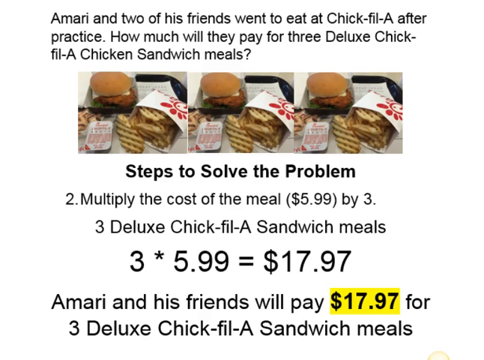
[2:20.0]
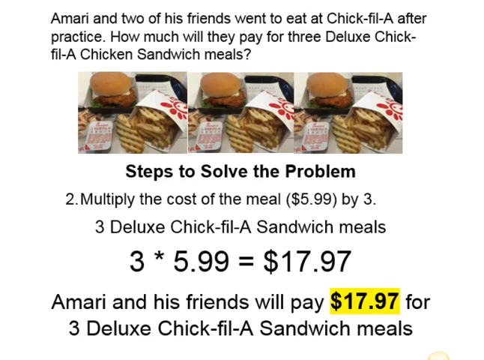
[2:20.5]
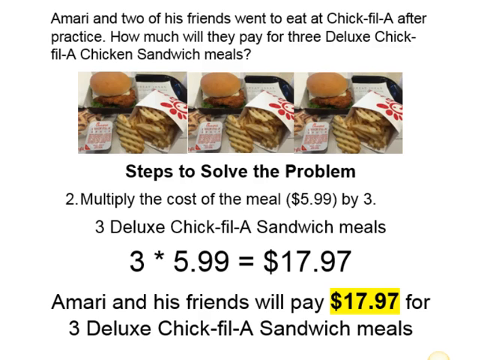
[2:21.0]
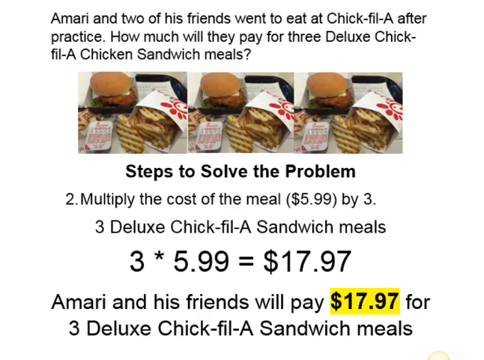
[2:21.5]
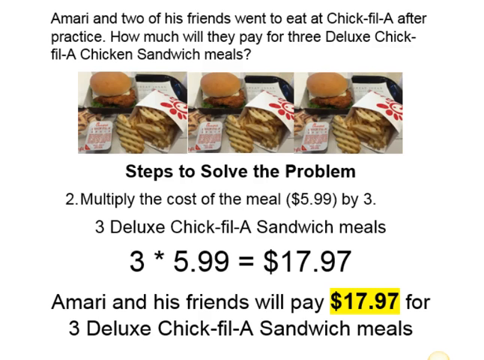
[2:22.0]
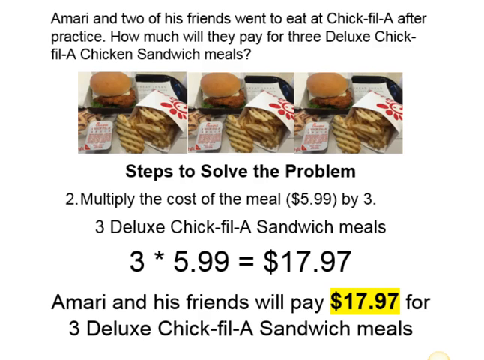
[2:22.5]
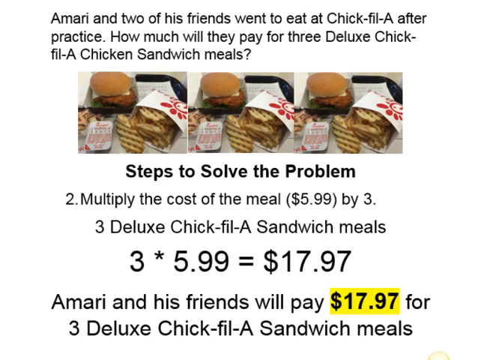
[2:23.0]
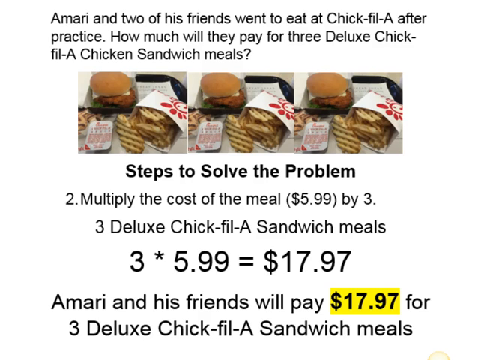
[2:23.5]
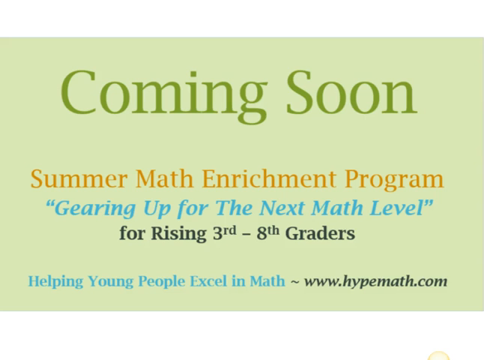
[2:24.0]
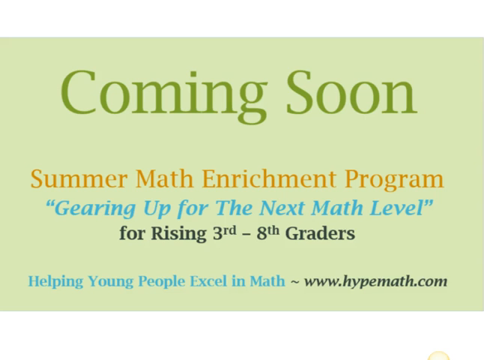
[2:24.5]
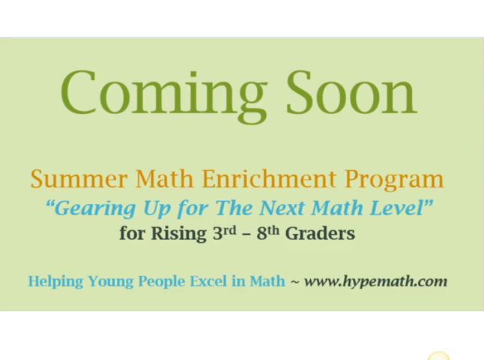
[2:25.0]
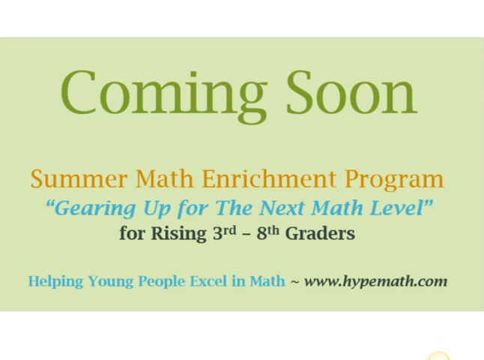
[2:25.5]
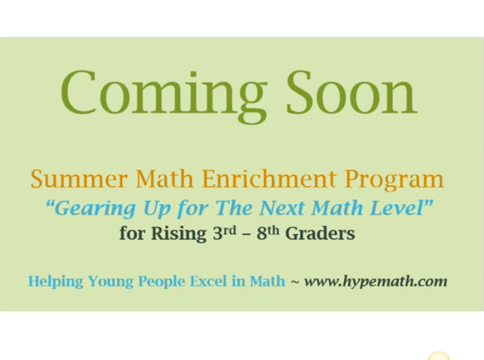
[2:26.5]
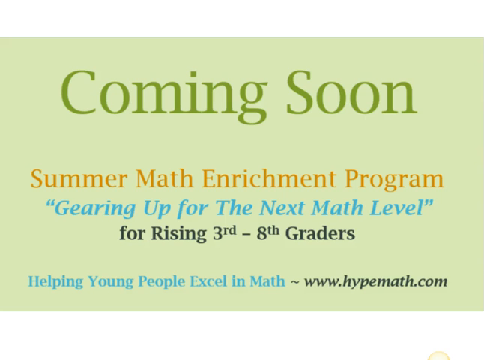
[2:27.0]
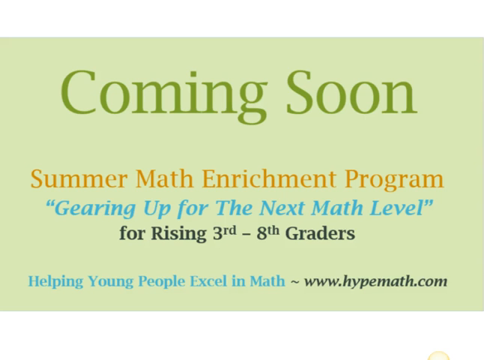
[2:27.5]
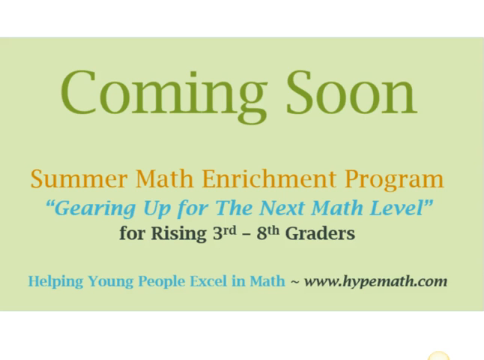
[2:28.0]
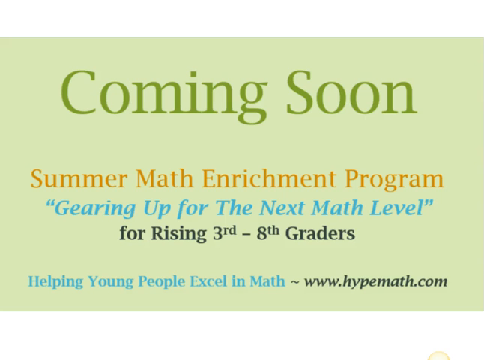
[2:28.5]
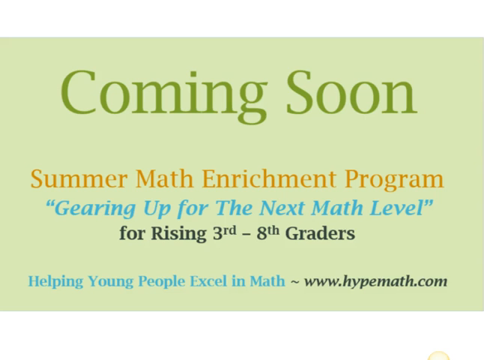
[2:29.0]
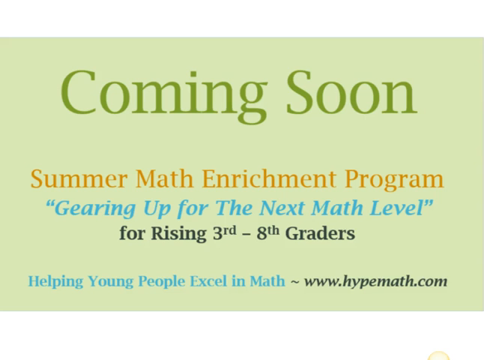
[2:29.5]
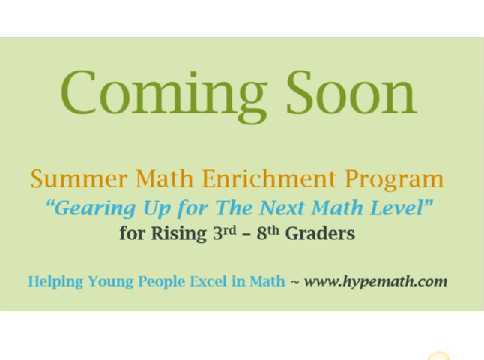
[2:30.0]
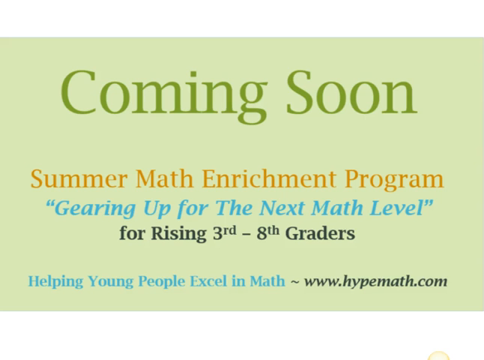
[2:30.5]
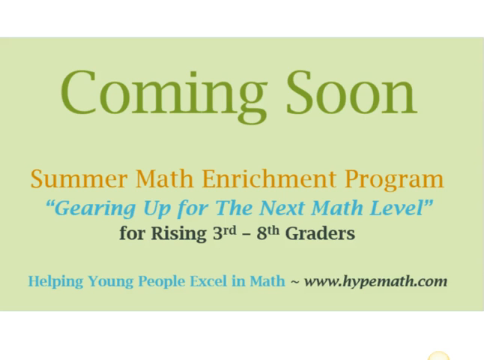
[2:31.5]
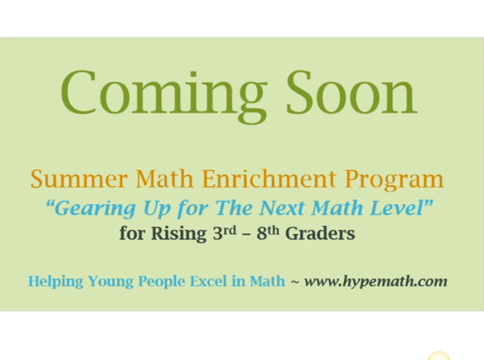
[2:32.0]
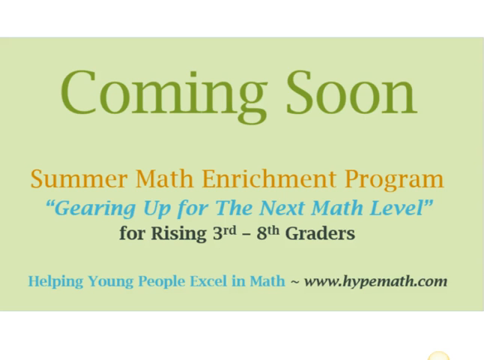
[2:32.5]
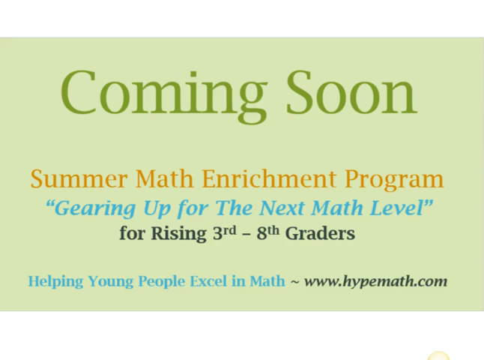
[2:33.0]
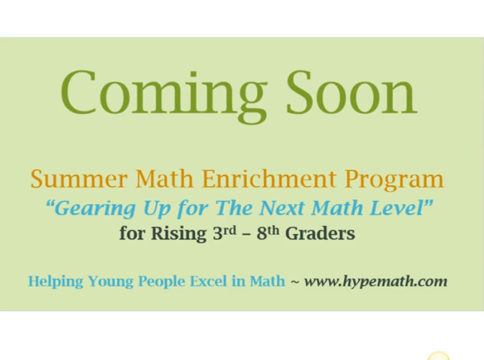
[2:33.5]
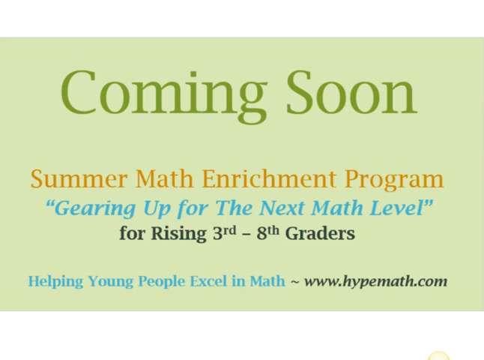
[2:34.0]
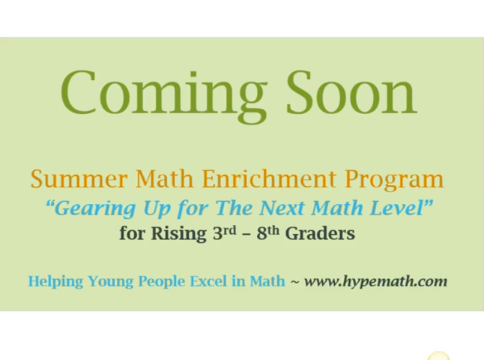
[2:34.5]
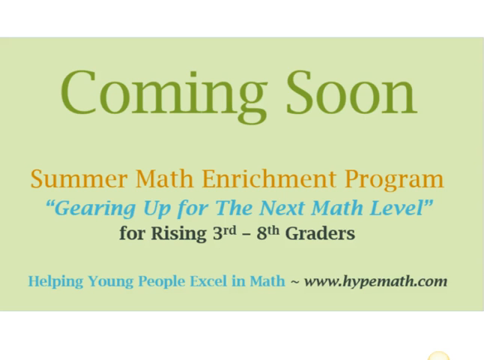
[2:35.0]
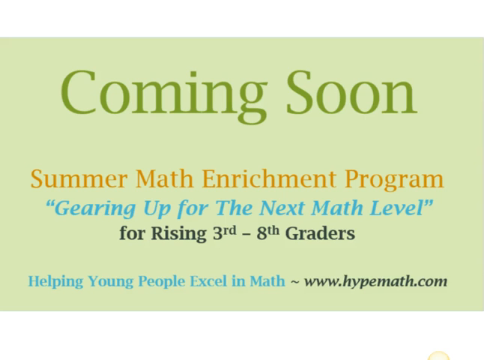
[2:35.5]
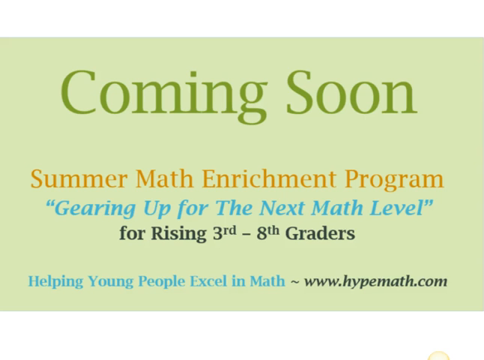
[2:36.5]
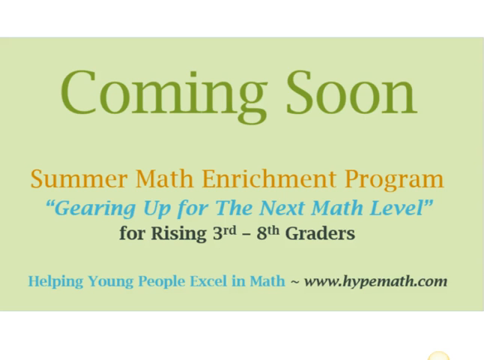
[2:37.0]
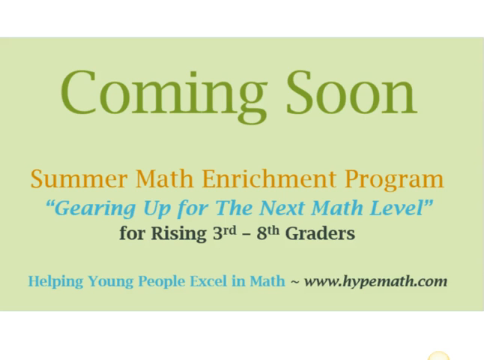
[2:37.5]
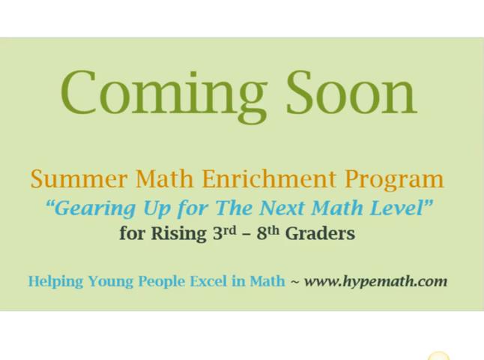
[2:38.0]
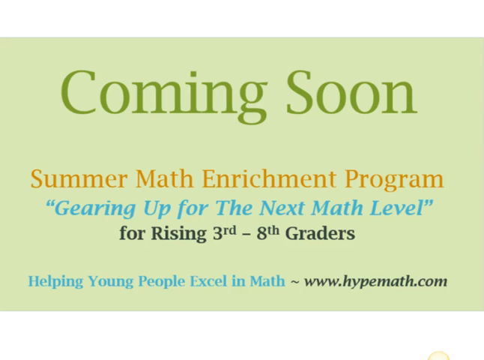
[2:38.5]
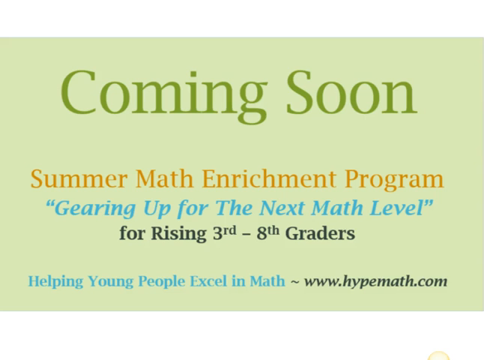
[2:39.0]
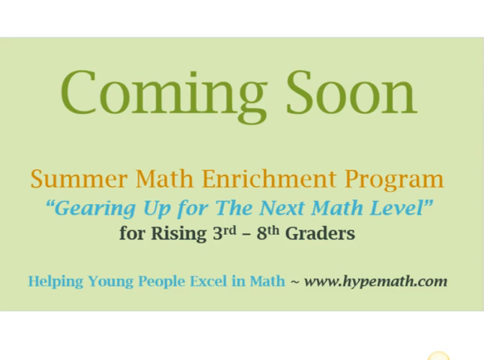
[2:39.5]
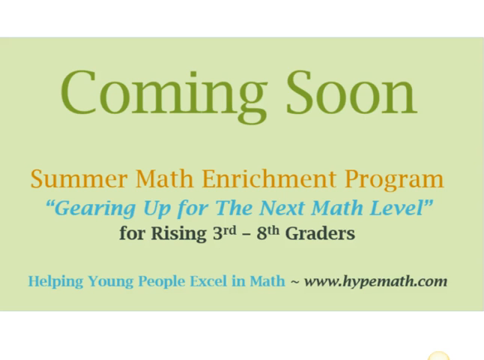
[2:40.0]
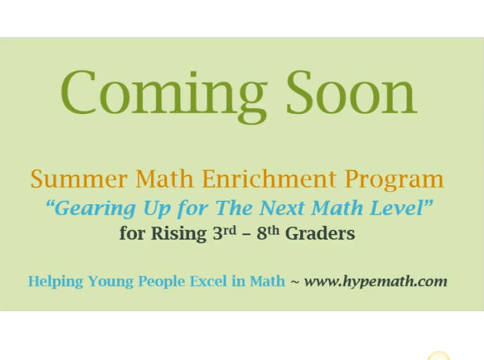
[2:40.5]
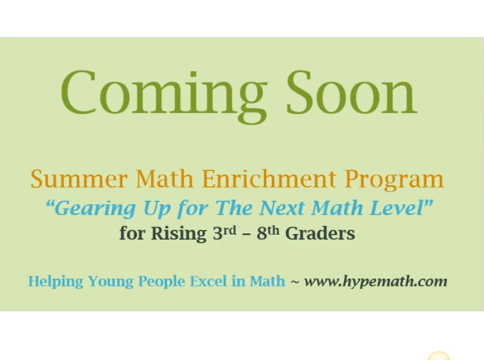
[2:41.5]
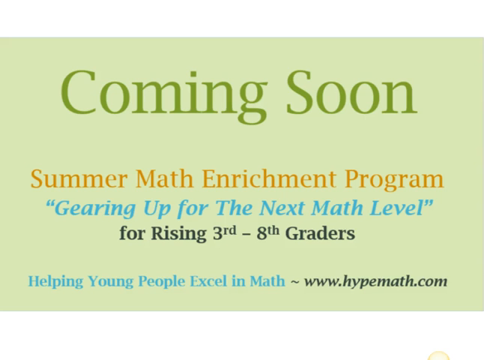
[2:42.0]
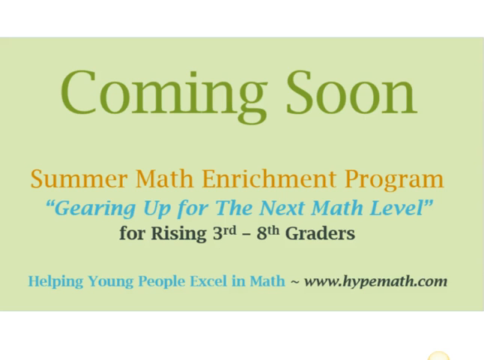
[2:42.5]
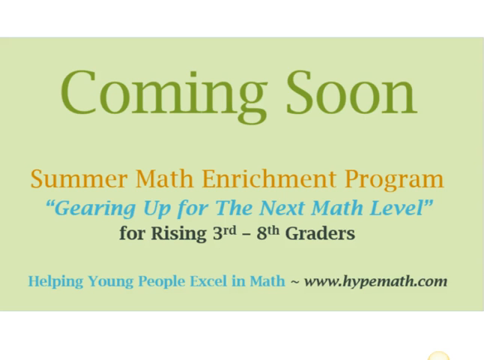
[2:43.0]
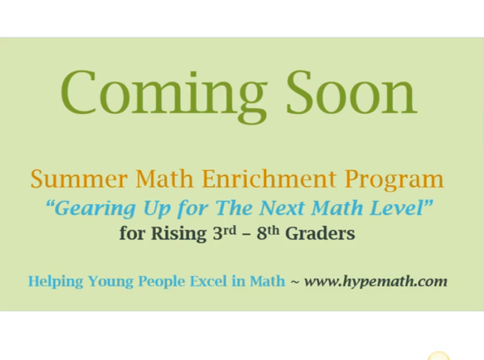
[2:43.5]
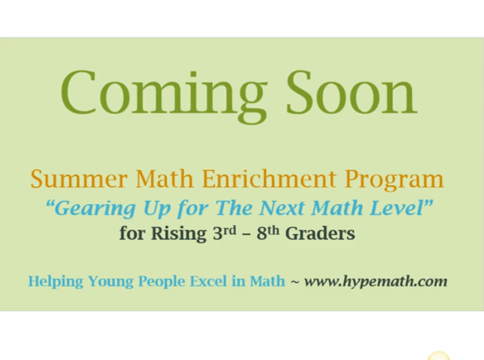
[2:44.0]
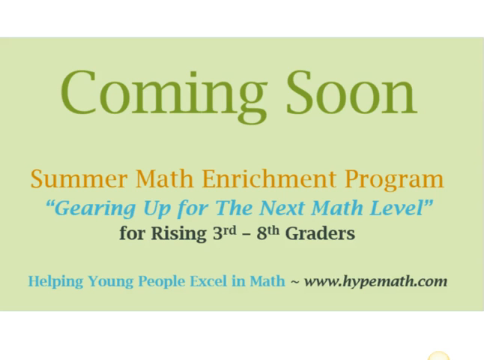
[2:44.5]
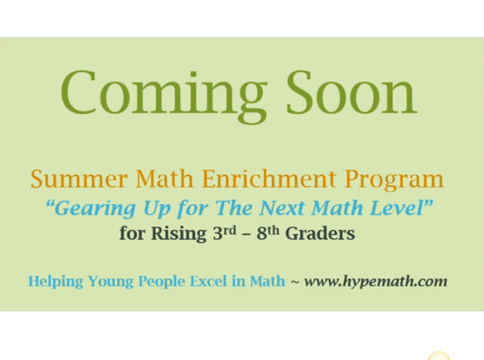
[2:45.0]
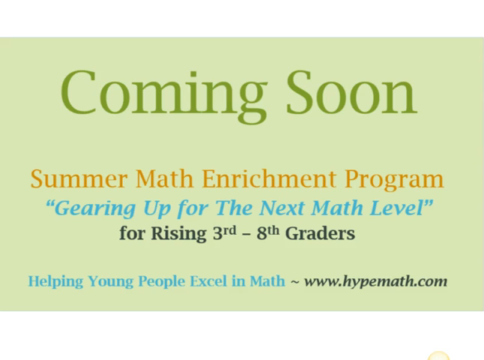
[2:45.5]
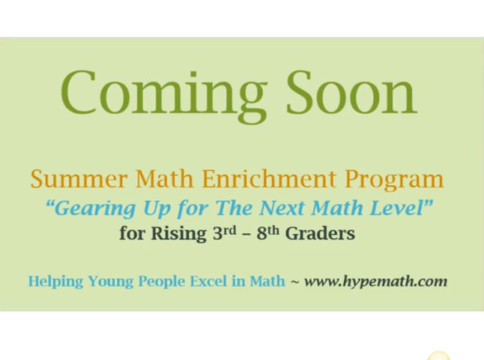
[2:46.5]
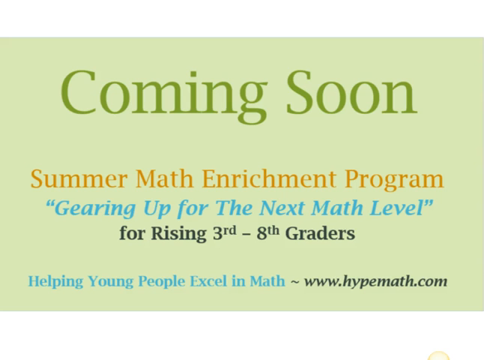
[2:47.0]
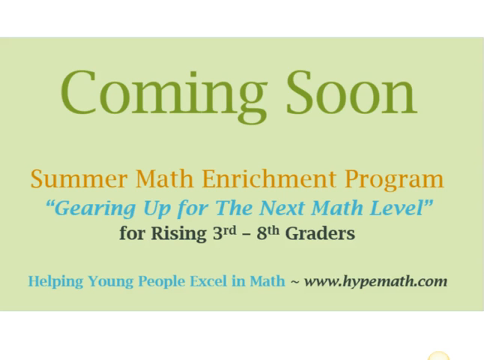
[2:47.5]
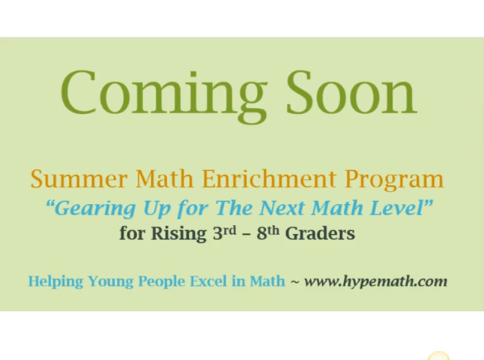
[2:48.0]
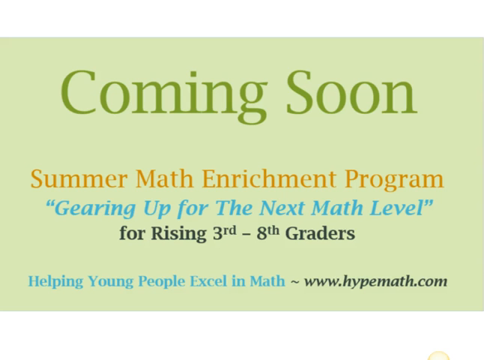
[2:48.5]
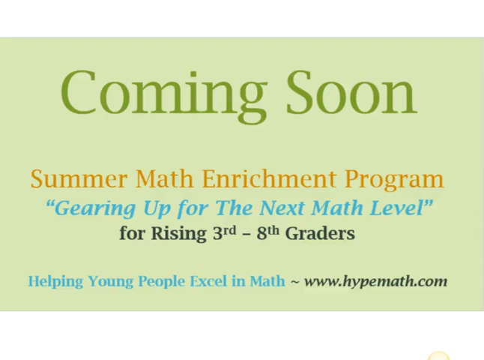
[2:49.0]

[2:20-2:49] The screen still shows what Amari and his friends will pay for the Chick-fil-A sandwich meals, along with the three identical pictures of the Chick-fil-A meal with the sandwich, the French fries and the small packet of sauce. At the very end it changes to a green screen. On the green background, large green lettering says "coming soon." The next line, in orange, says "summer math enrichment program." The next line, in blue italics, says "gearing up for the next math level." Underneath that, in black, it says "for rising third to eighth graders." Then, in blue, it says "helping young people excel in math," and in black there is the website "www.hypemath.com." The video then ends.